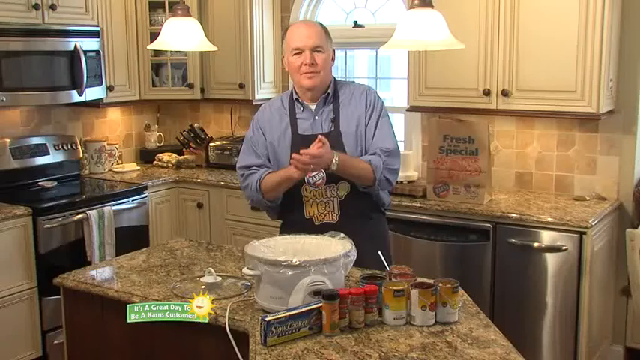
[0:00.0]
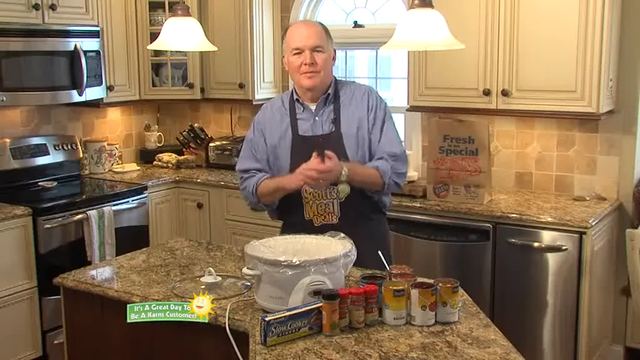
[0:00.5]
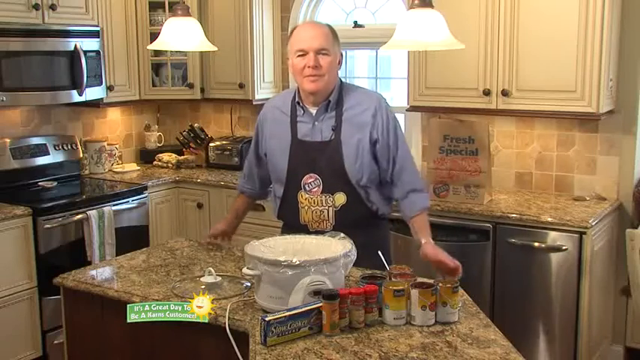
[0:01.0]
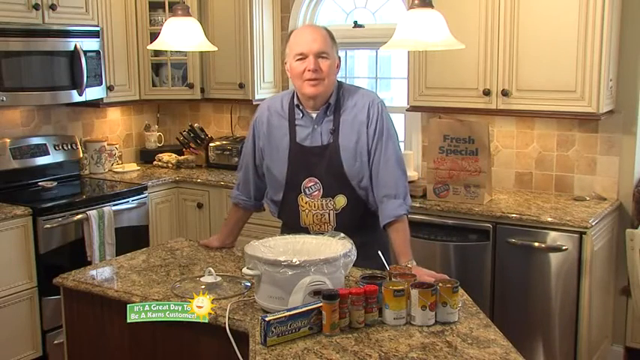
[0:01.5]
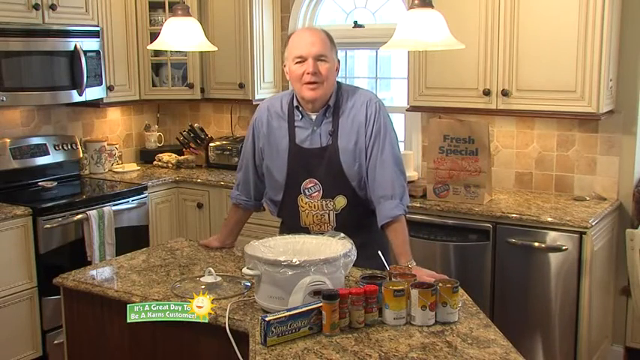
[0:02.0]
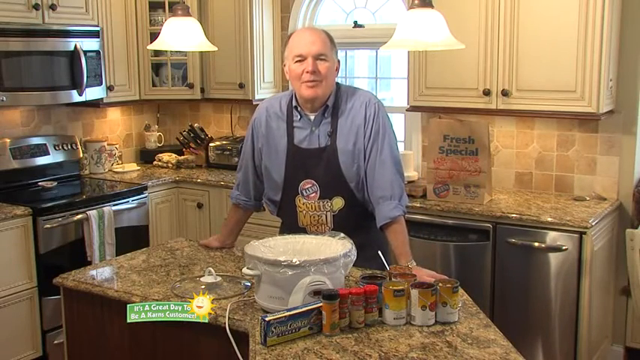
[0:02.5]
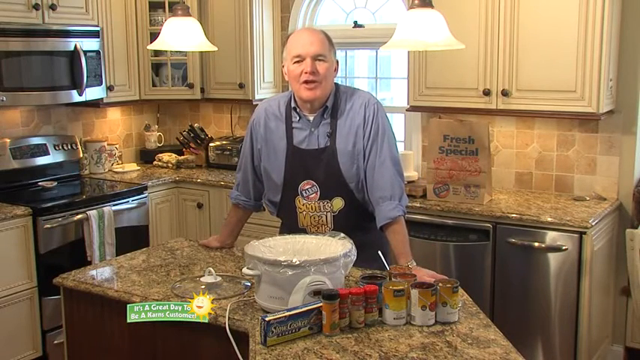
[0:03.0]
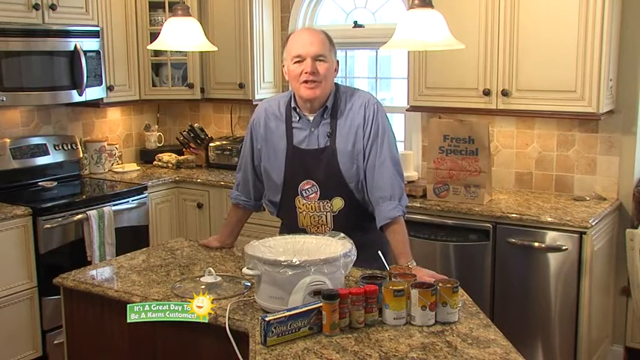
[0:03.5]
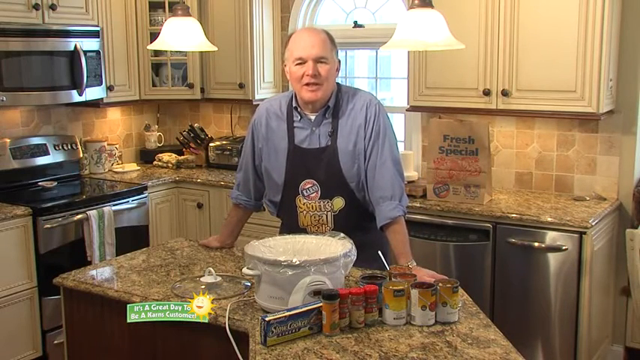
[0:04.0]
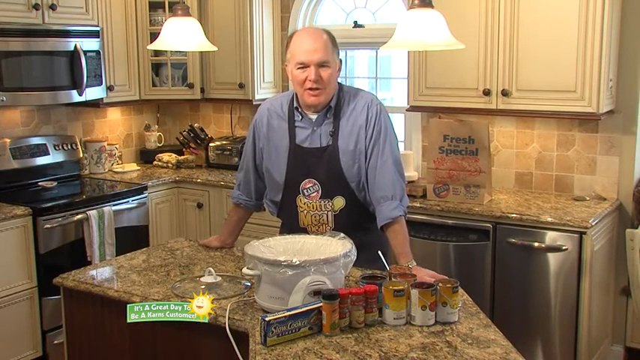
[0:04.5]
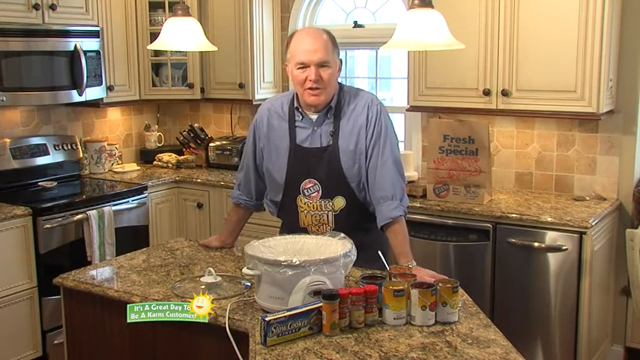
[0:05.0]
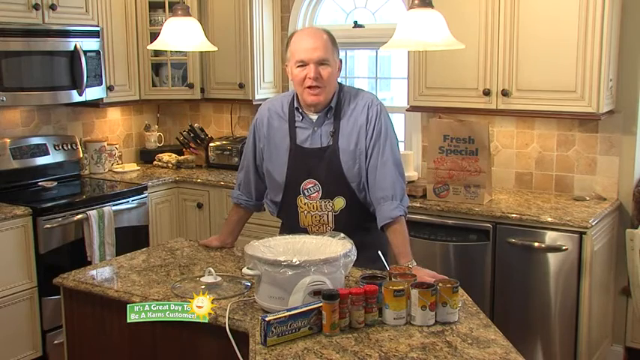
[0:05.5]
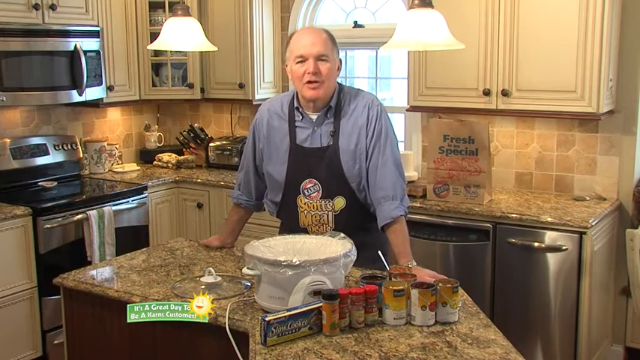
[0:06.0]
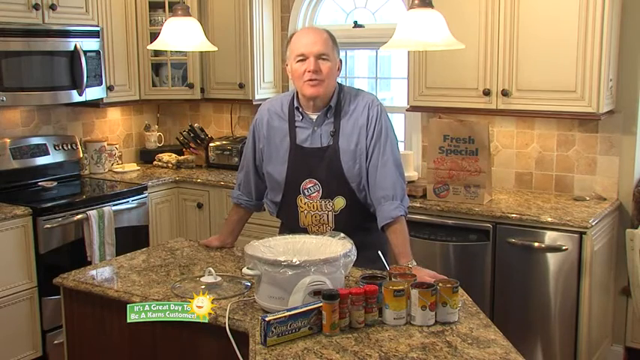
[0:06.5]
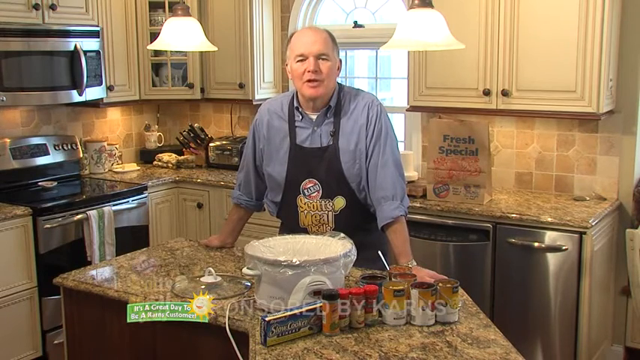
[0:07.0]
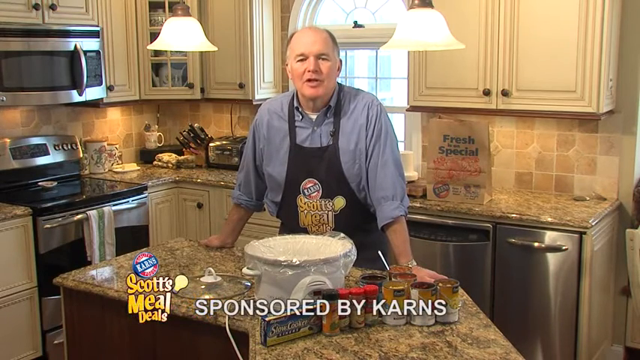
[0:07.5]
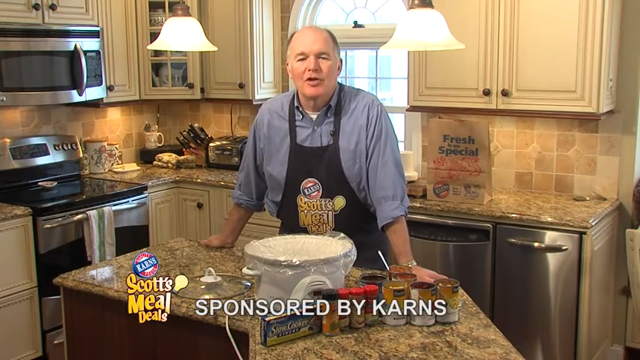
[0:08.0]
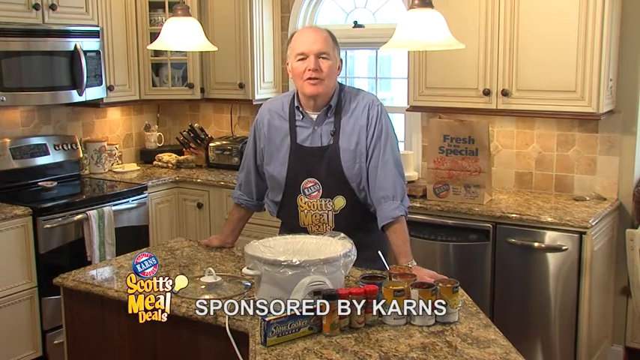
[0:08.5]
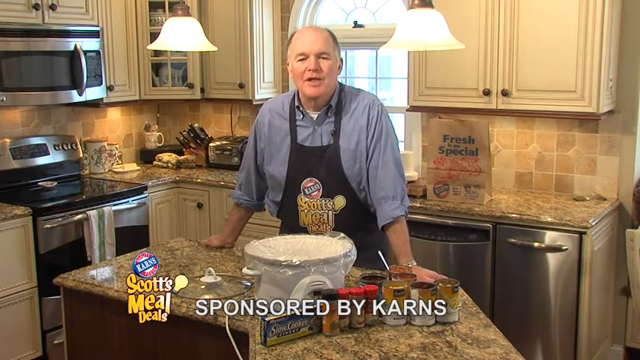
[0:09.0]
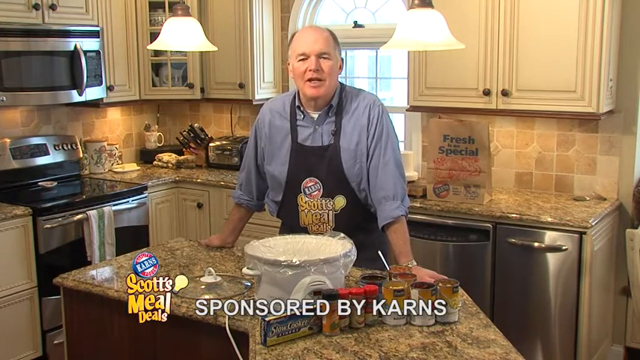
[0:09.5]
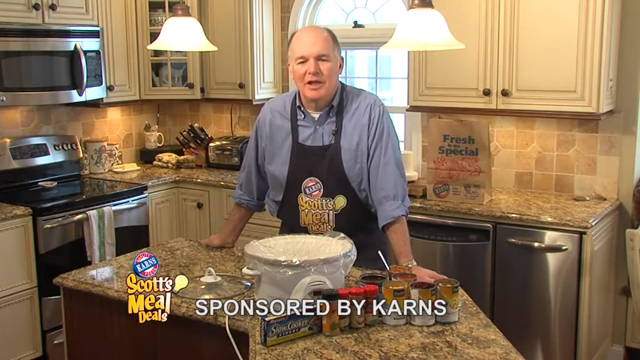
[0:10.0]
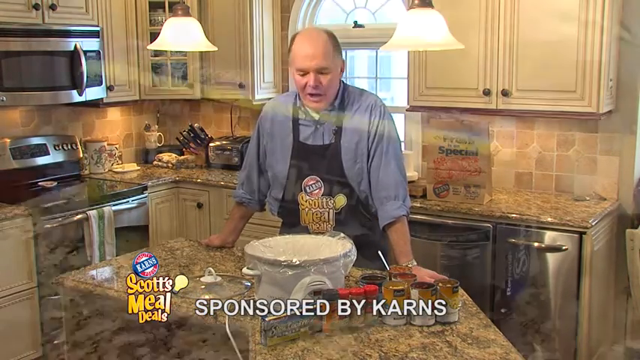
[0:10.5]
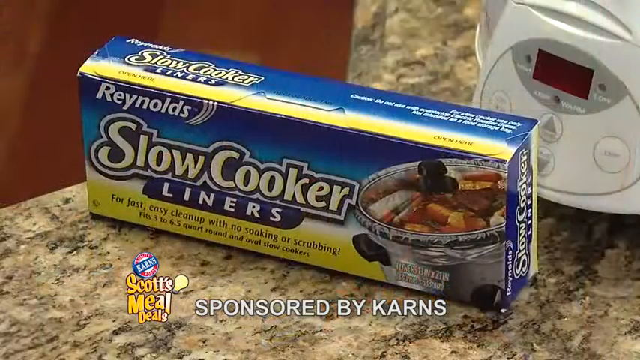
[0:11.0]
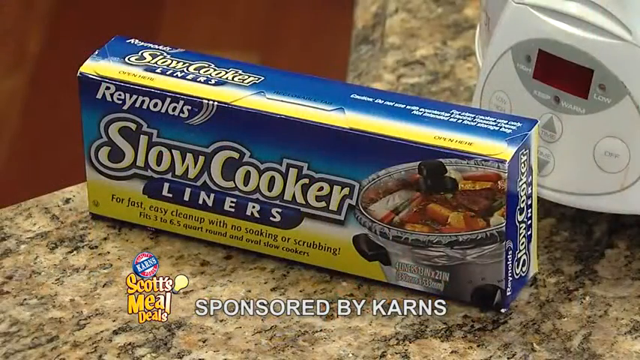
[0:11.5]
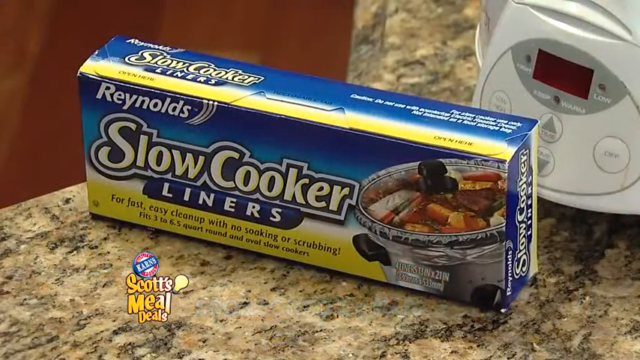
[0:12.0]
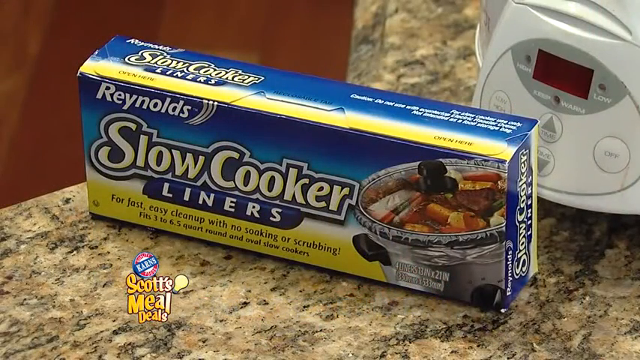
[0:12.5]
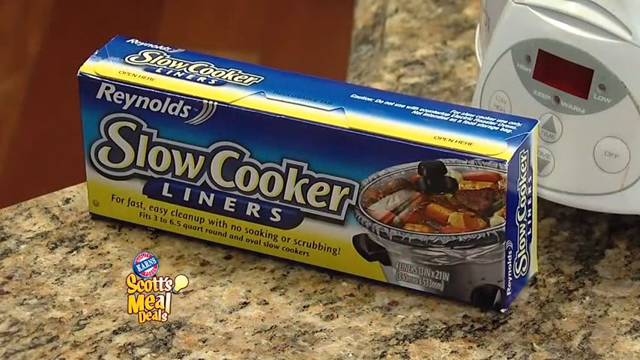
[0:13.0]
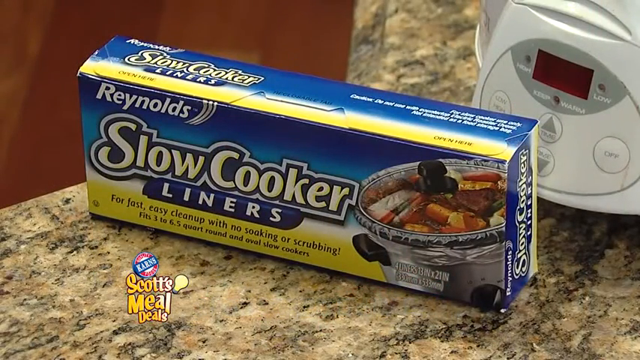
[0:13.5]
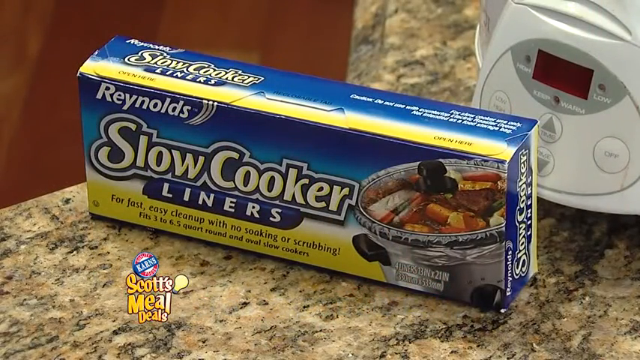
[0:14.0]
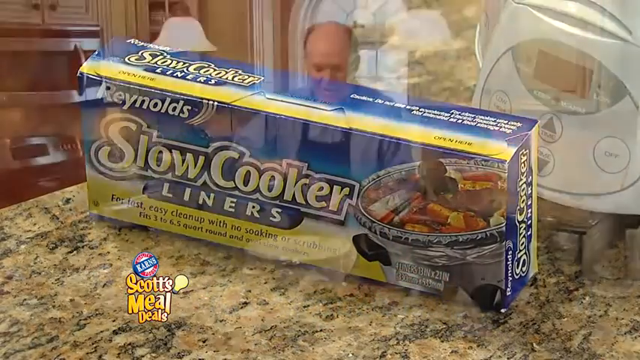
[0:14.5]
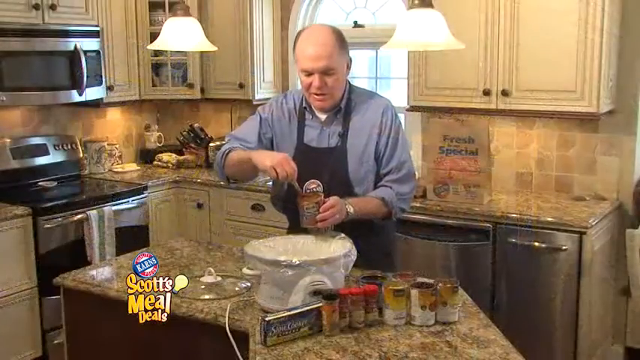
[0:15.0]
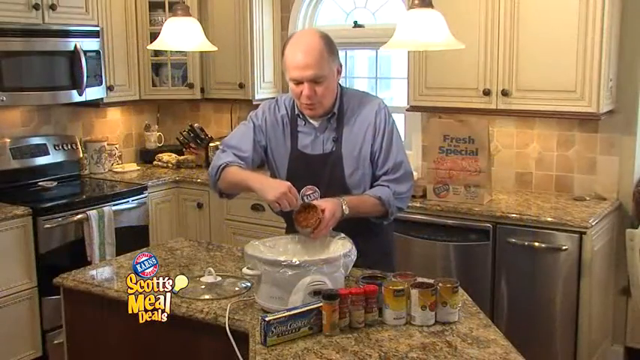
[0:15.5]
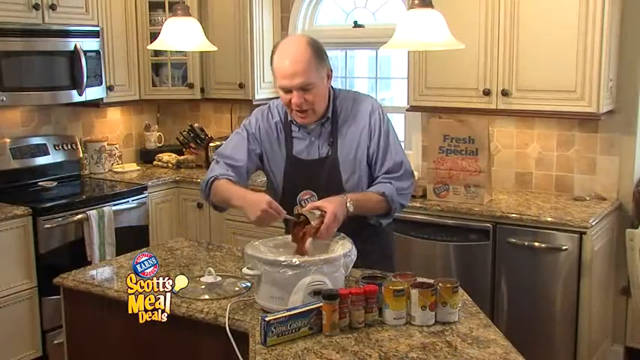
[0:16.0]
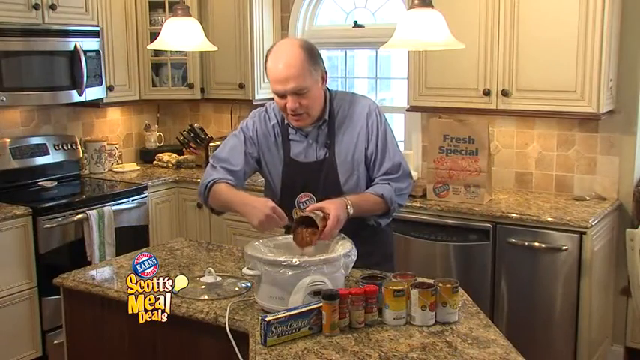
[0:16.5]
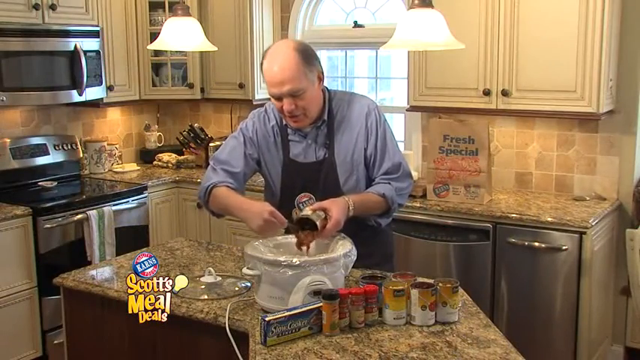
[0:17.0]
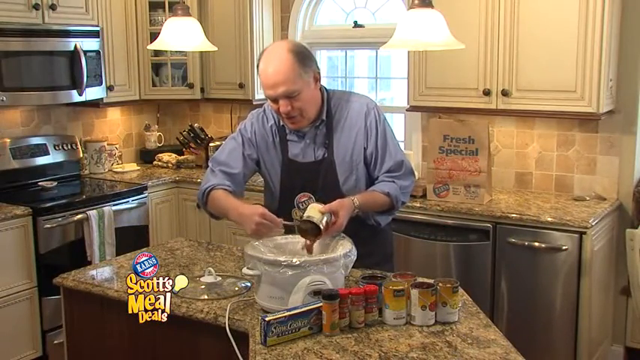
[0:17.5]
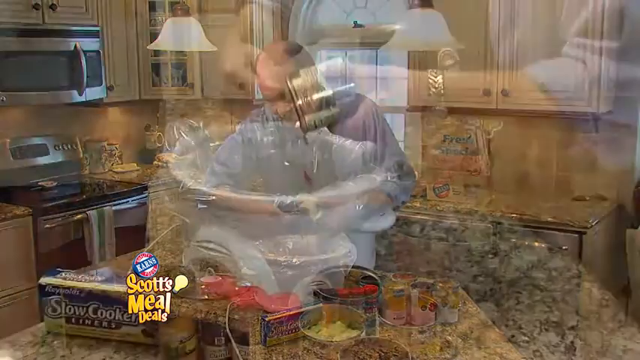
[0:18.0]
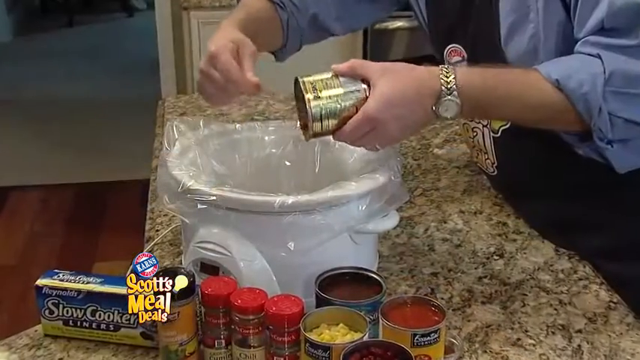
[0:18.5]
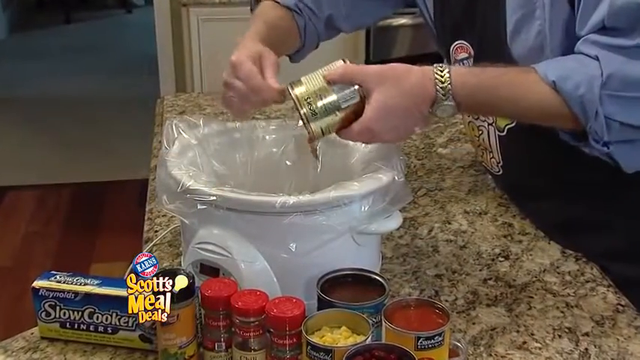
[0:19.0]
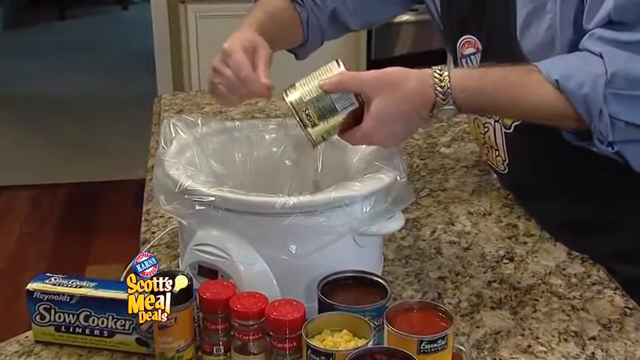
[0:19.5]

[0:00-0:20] In a kitchen with a dishwasher, an oven, a microwave and several white cabinets in the background, plus a toaster and a knife holder in the back, an older man in about his 50s or 60s is the subject, in the middle of the frame. He wears a blue button-up shirt and a black apron that says "Scott's Meal Deals". Text at the bottom of the video reads "sponsored by Karns". The man is standing behind a countertop holding different ingredients, a slow cooker and some spices. The slow cooker is lined with a plastic slow cooker liner, and the video cuts to the product, "Reynolds slow cooker liners", whose text also says "for fast easy cleanup with no soaking or scrubbing". The man dumps Heinz beans into the slow cooker. He has a friendly expression and uses hand and head movements as he goes.